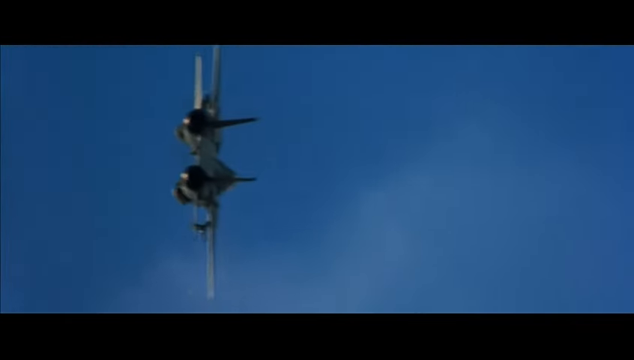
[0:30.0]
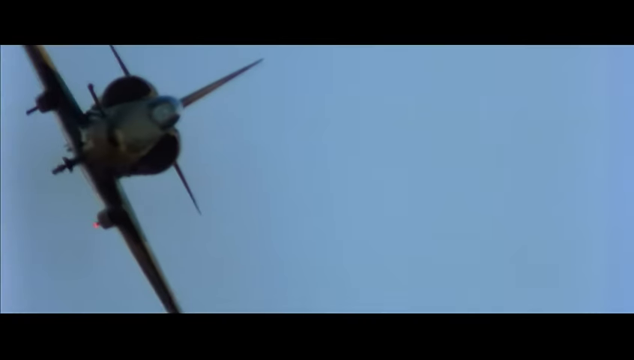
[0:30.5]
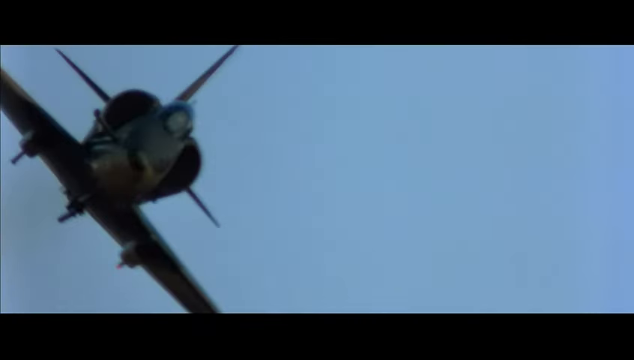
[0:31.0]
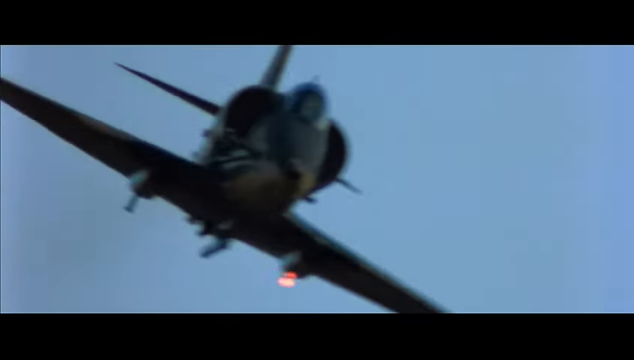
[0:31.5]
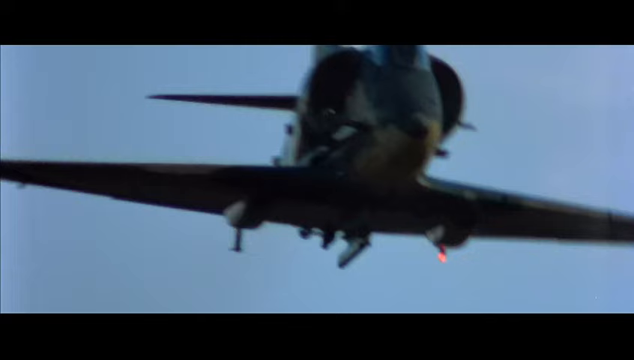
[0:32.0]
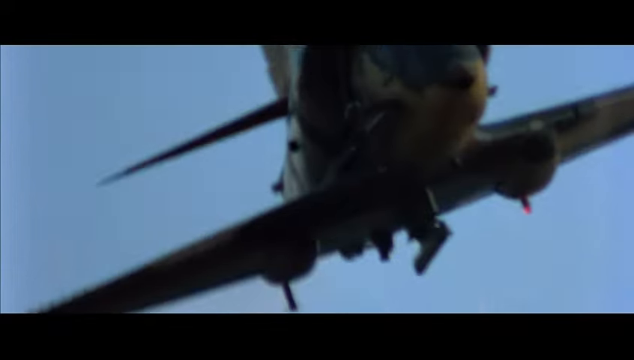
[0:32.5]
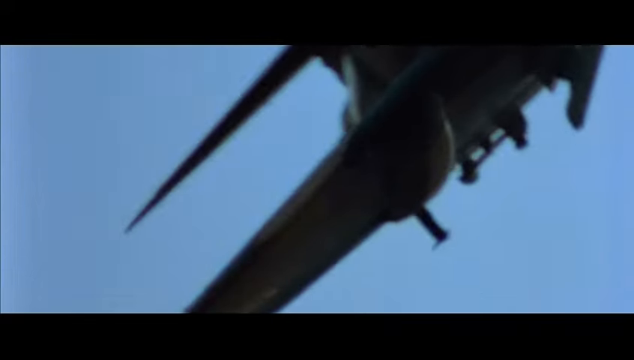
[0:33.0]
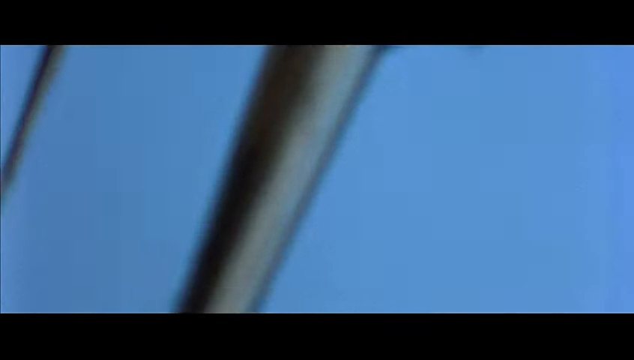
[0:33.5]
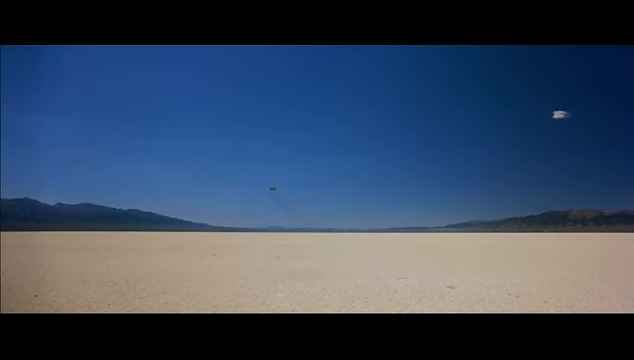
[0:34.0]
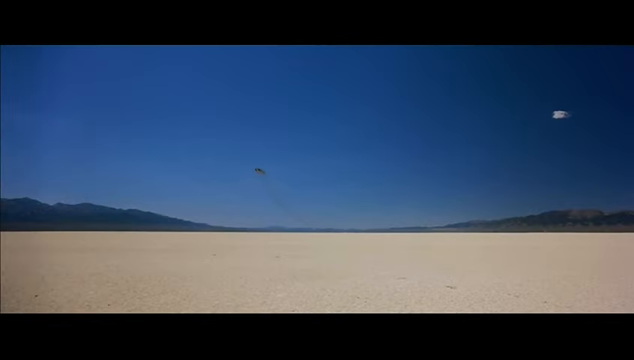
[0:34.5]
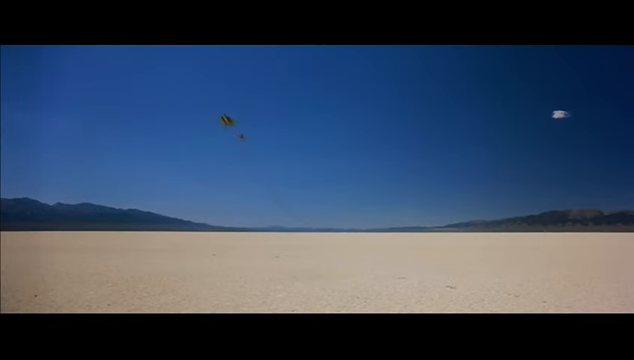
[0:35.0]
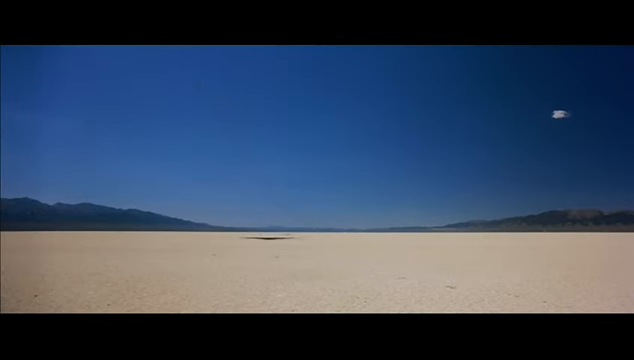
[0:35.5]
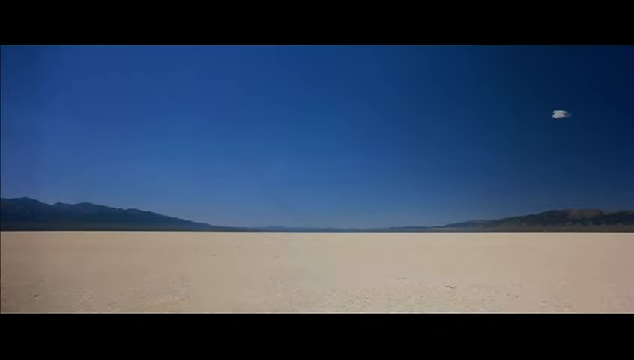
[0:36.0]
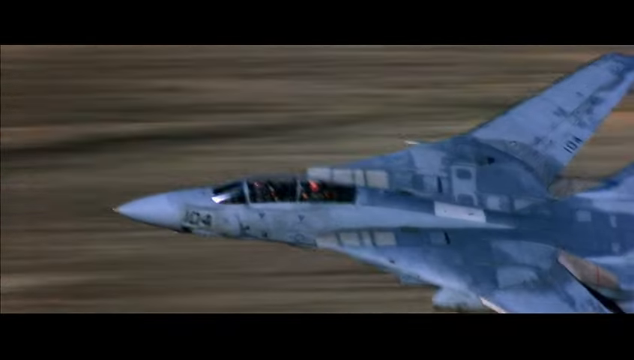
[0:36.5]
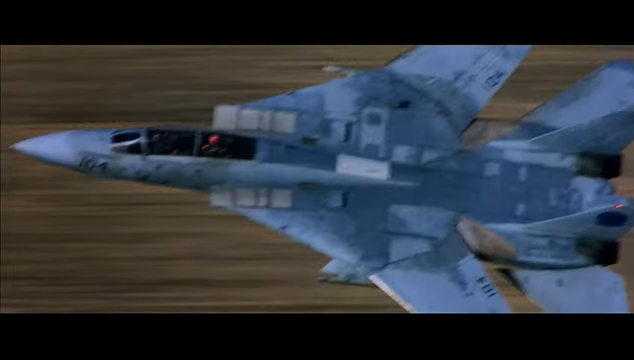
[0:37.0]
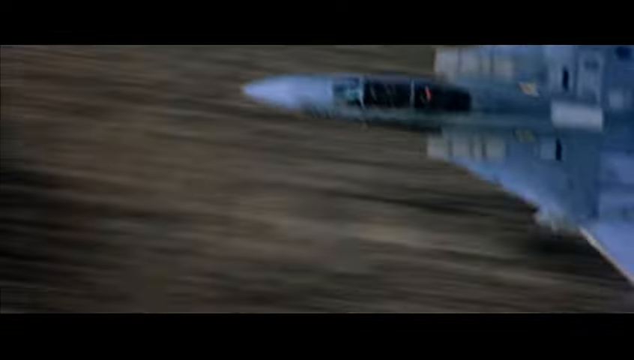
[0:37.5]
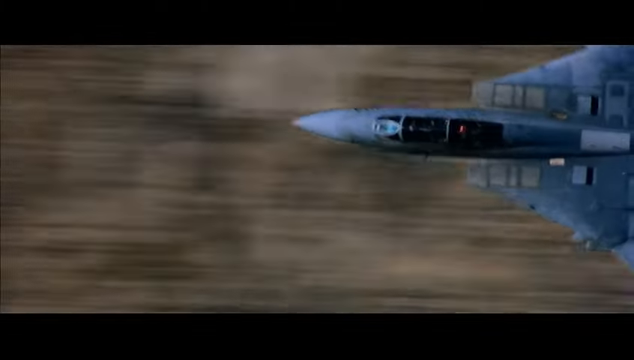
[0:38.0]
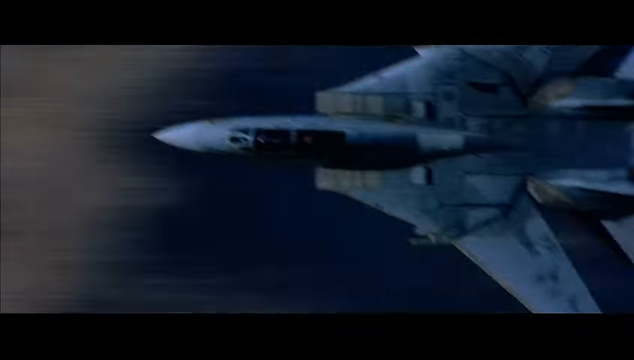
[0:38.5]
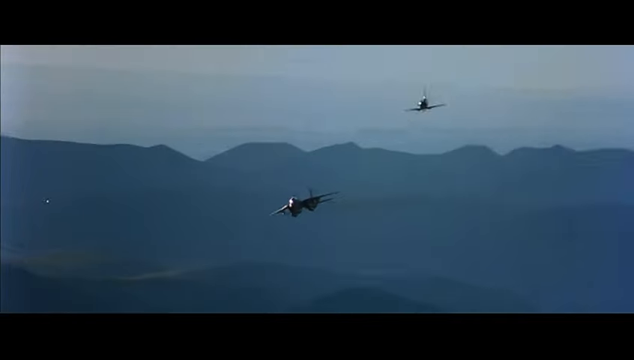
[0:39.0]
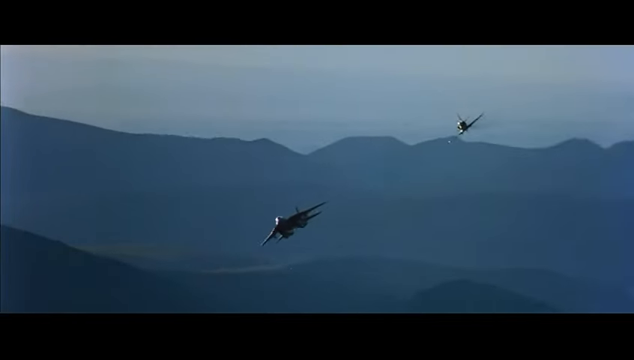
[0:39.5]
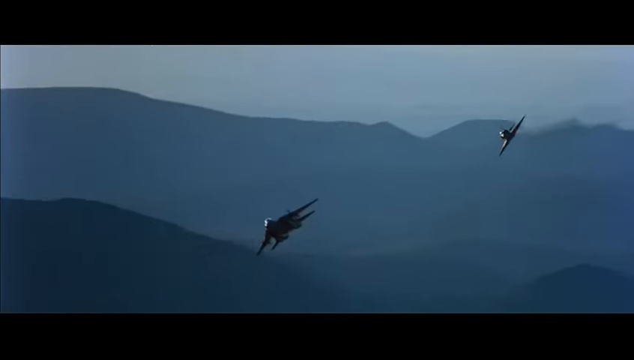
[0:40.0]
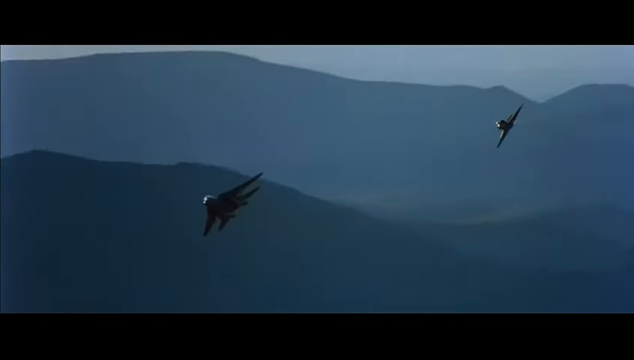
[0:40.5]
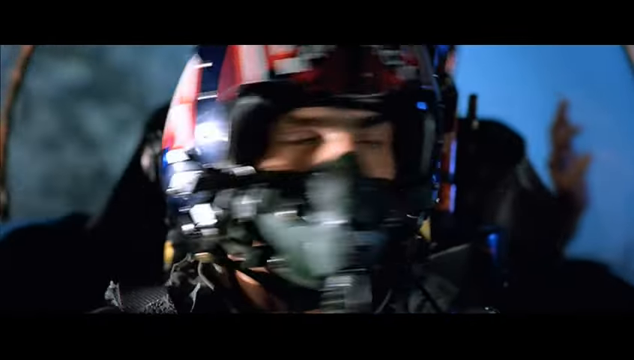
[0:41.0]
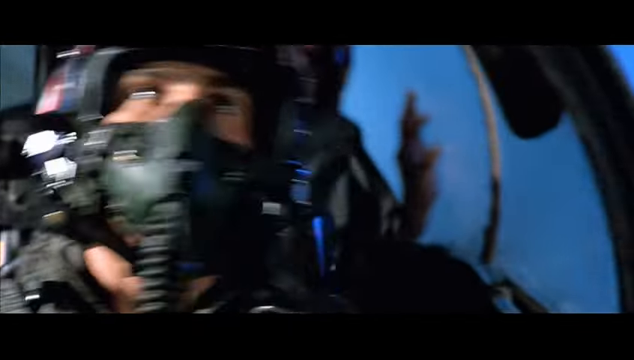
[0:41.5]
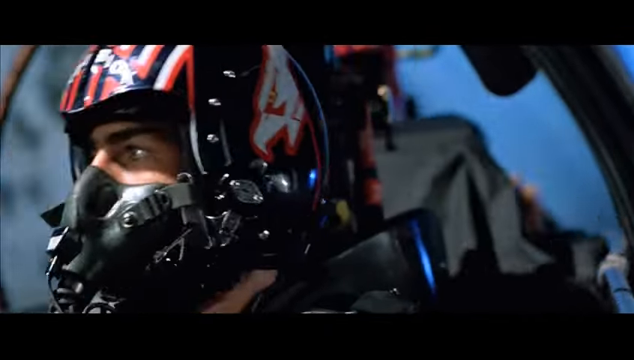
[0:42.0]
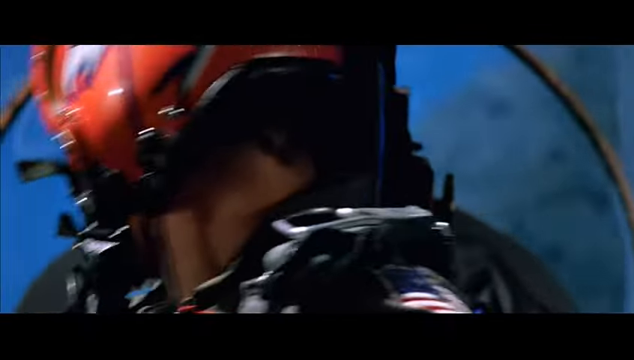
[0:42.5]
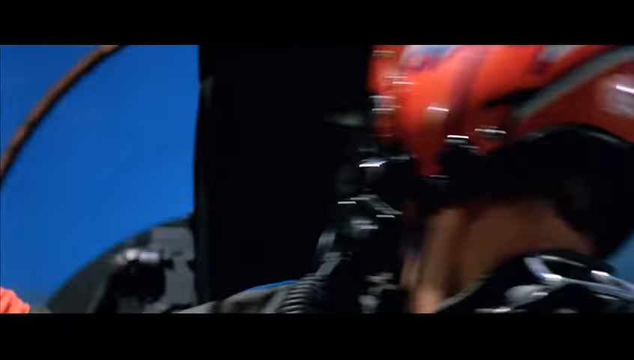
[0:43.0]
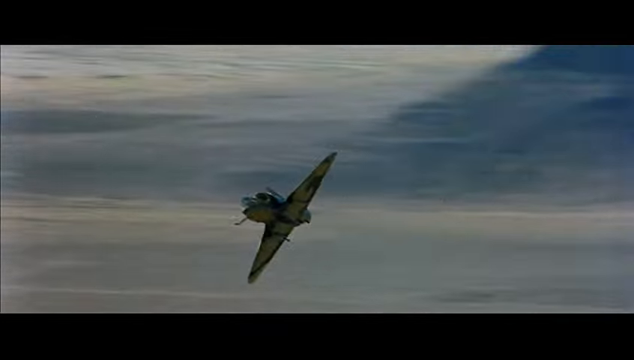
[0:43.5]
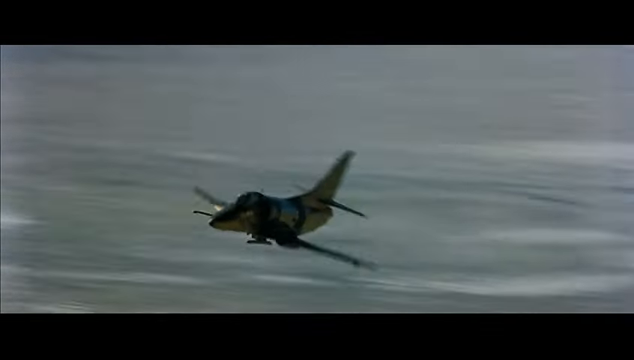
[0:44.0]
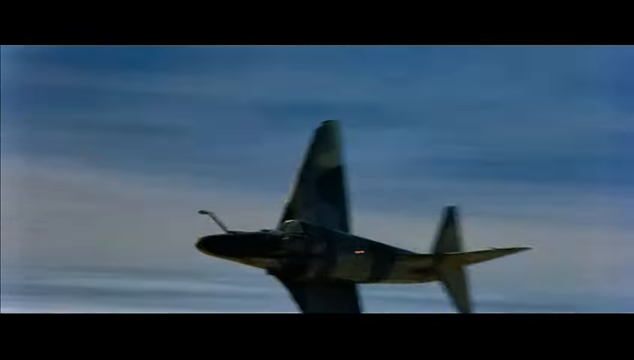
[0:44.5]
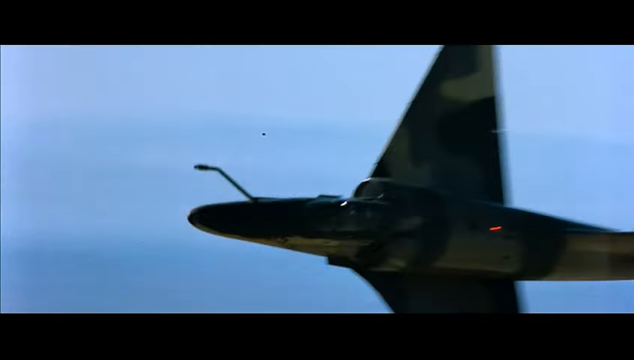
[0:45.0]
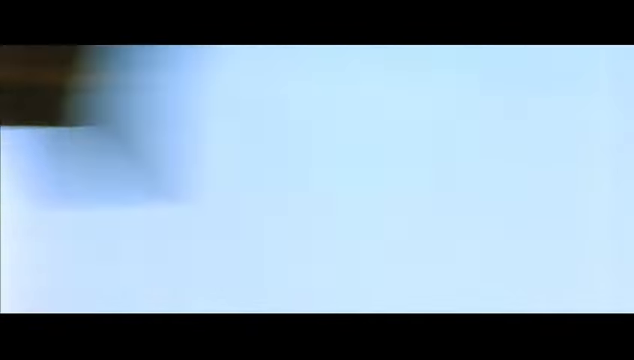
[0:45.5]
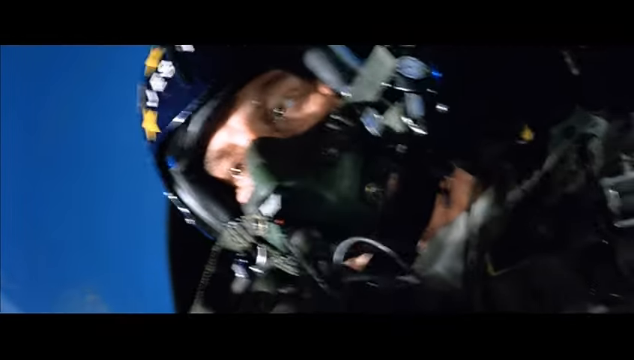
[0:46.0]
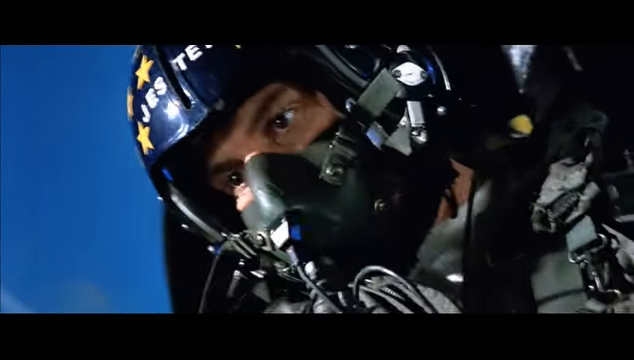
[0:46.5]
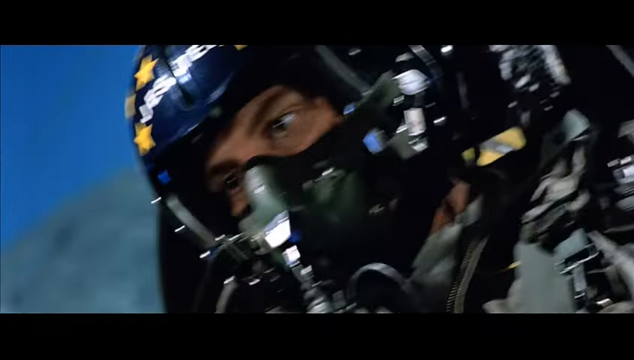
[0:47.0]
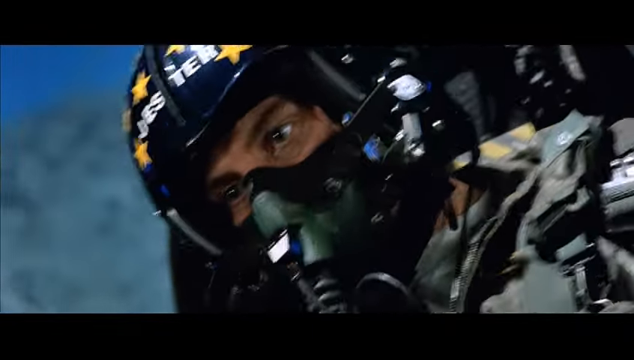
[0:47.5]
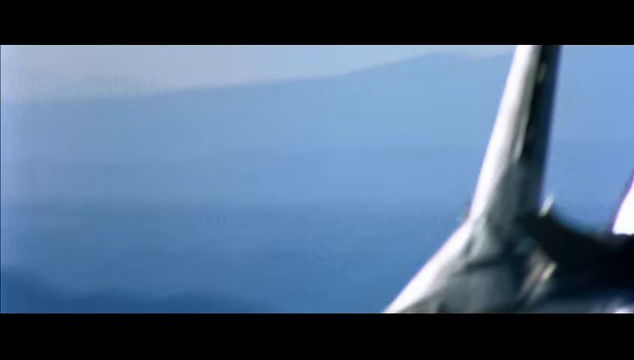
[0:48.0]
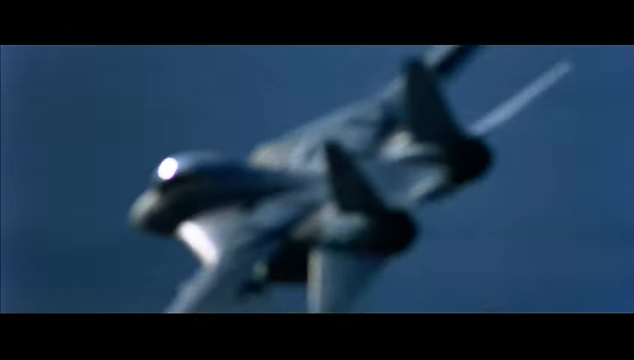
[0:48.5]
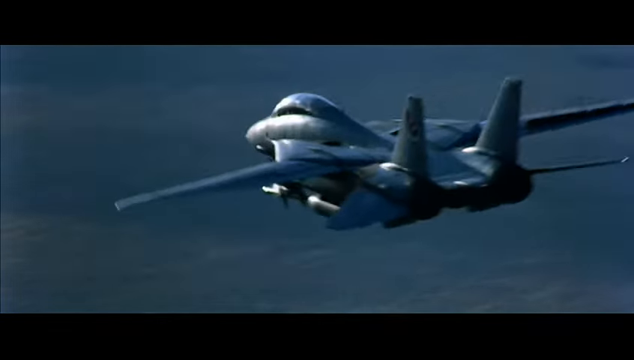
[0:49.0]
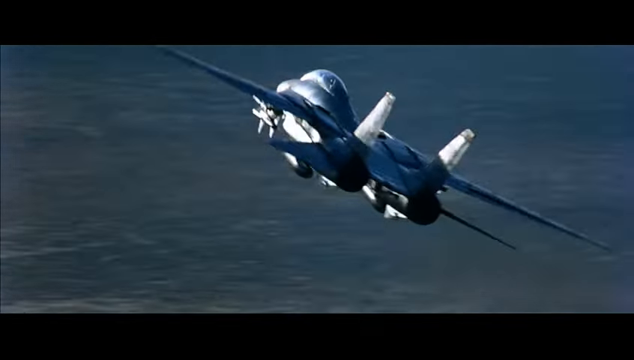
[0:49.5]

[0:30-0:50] A jet fighter is on its side, then positions itself upright, with an orange light flashing below it. In a widescreen shot looking up from the desert, mountains are visible in the distance on either side under a blue sky, and the plane disappears out of shot to the left while its shadow passes. An aerial shot shows a blue fighter jet with the number 104 on its right wing and on its tip. Another aerial shot shows two jet fighters going over mountains, appearing to follow one another. Inside a cockpit, the pilot looks up and to the left, then to the right. In another cockpit, a pilot wearing a red helmet, a metal buckle on his shoulder and an oxygen mask looks behind him. A plane comes from the right of the screen with rocks behind it as it advances; the rocks disappear, leaving only sky, and the plane spins on its side. The scene cuts to another pilot in a cockpit wearing a blue helmet with yellow stars on it, then to a bluish-silver jet fighter seen from behind.